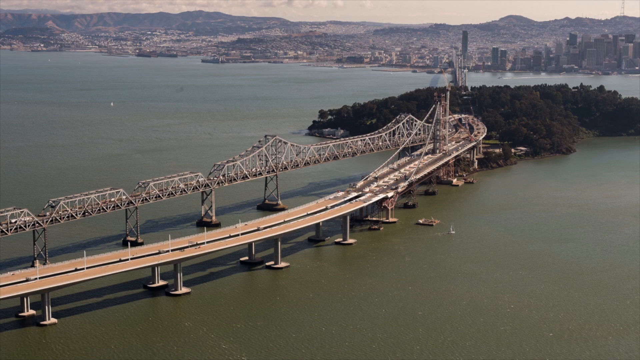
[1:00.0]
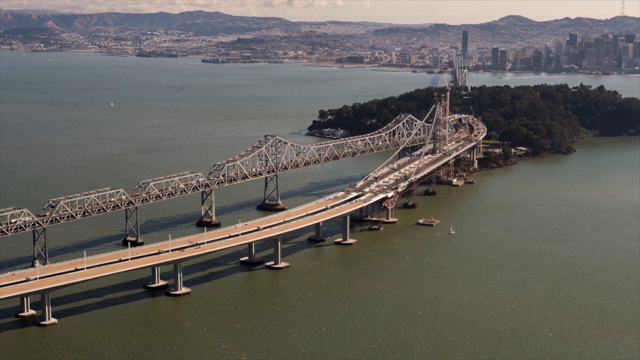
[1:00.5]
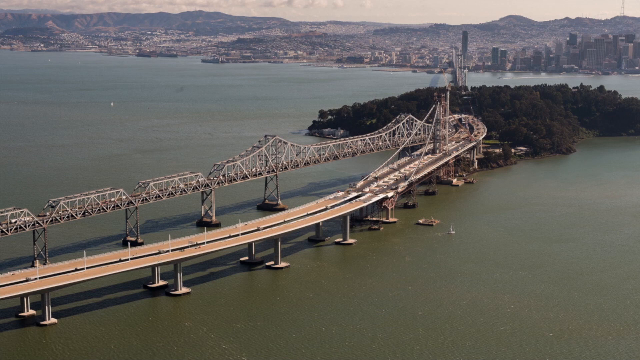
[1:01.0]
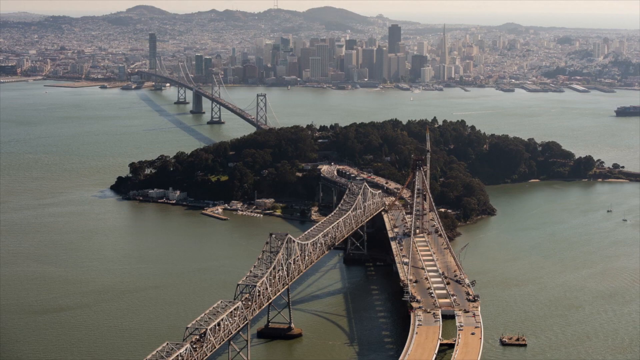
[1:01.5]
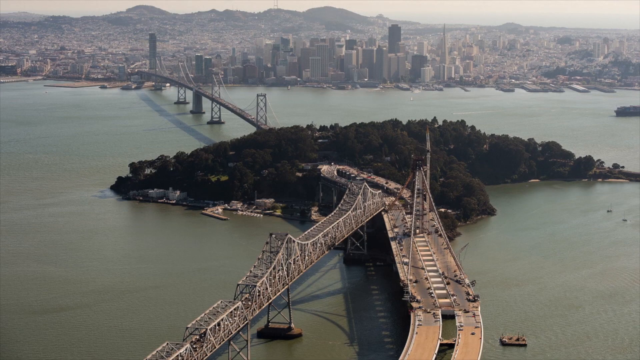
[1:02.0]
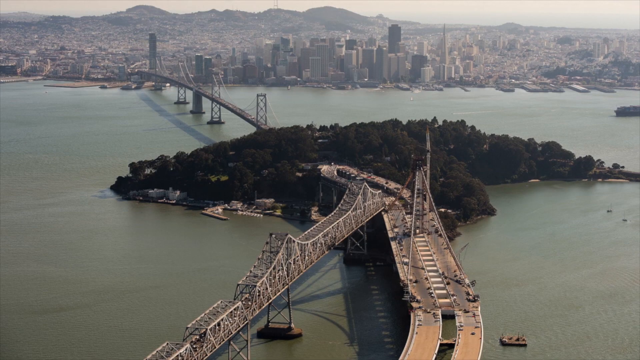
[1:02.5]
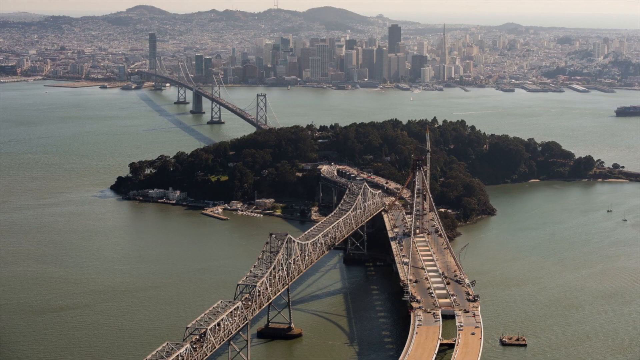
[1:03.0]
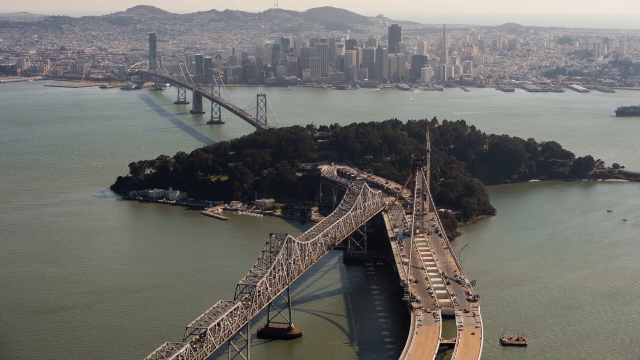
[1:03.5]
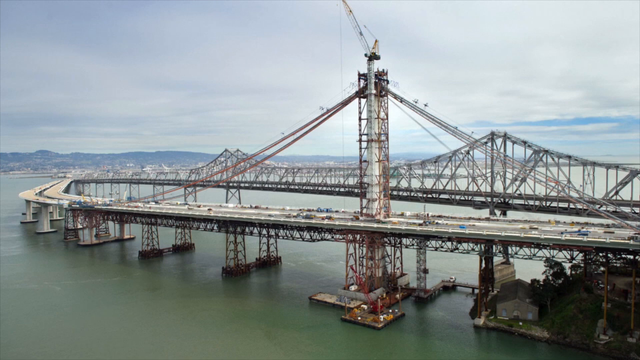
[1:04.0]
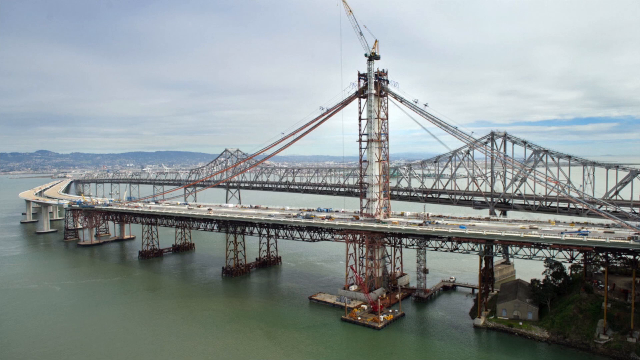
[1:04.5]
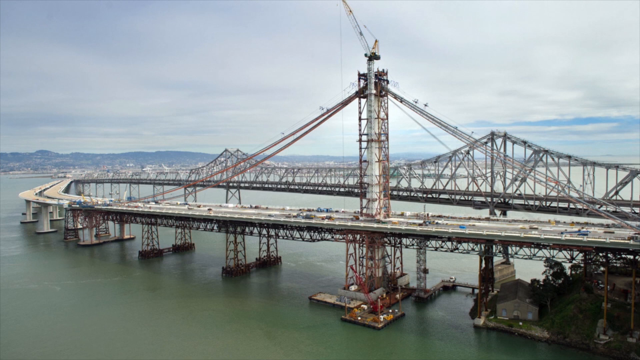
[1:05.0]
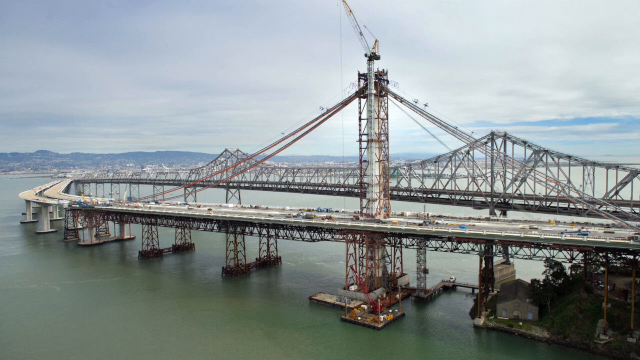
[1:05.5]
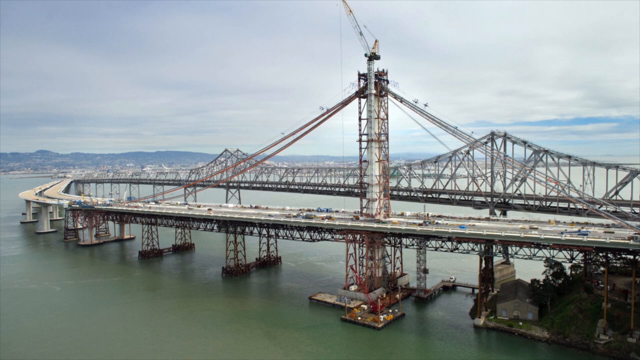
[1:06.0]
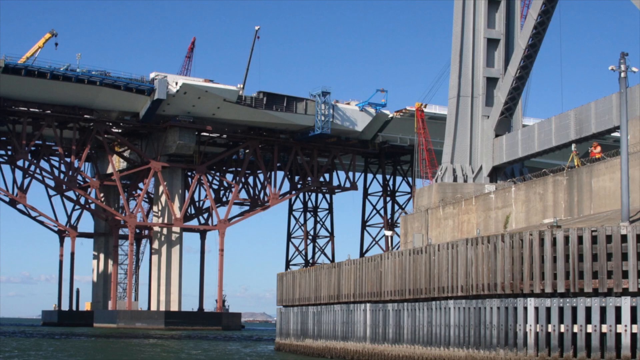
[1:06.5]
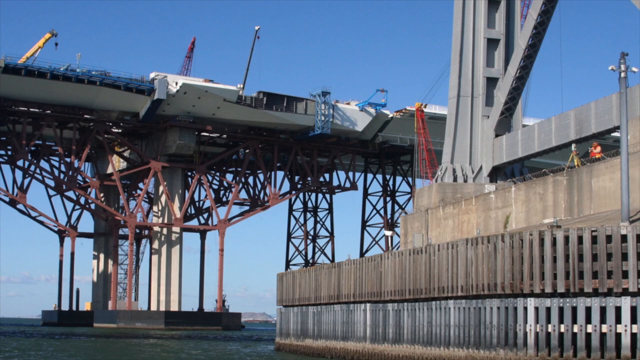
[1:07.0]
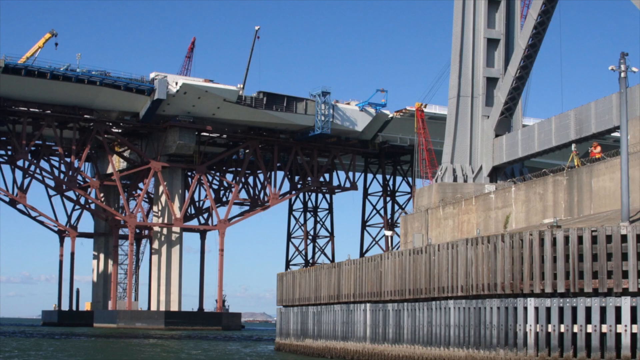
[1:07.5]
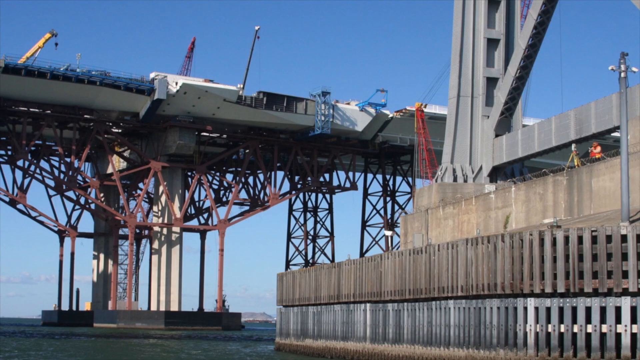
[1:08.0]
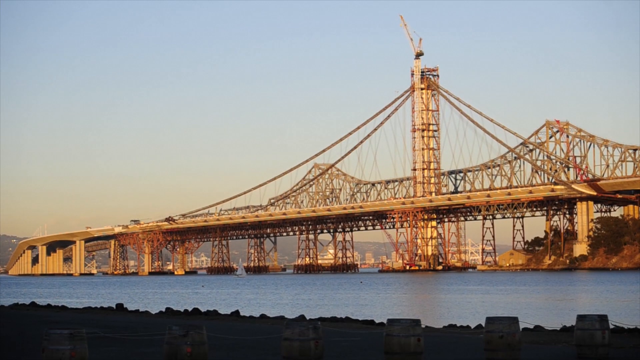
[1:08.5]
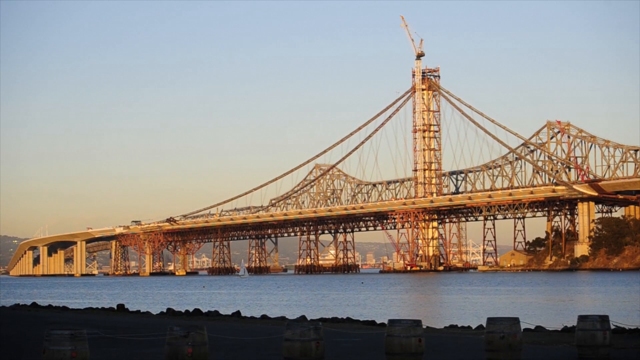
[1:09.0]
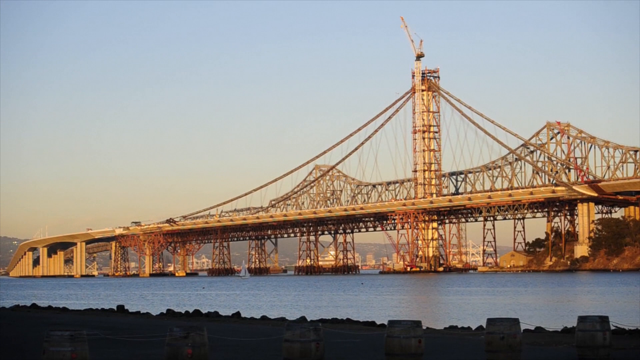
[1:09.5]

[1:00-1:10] An aerial shot shows the San Francisco-Oakland Bay Bridge span, starting from the lower left side and reaching about the middle of the picture. In the upper right is an island with a forest on it at the other end of the bridge, a city is in the background on the upper right, and the rest of the picture is a body of water. Another picture shows the same scene from slightly above the bridge: the forested island is in the center of the water with a span of bridge behind it, and another span of bridge on the upper left side leads to the city in the background, with water around the bridge and the island. Another picture shows the bridge from the side and a little closer, with water underneath. Construction beams are around the bridge; there is a tall white tower in the center of the bridge, with red construction beams built around the tower. Suspension cables are attached to the top of the tower and run back down to the bridge, and a city is in the background. The next picture is taken from near the water surface, looking up beneath the bridge. On the right is a large concrete piece of foundation with a big metal piece at its top, and on the upper left is the bottom of the bridge, with construction beams and red beams attached to it. The sky in the background is blue. Another picture, from farther away than the previous one, shows more of the red construction beams and the white tower in the center of the bridge, with four suspension cables coming down to the bottom of the bridge, two on the left and two on the right. Water is at the bottom of the picture, and the sky is slightly white and hazy. This appears to be a video, and it is slightly shaking.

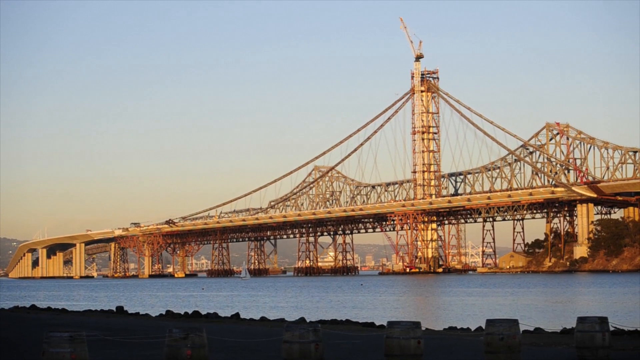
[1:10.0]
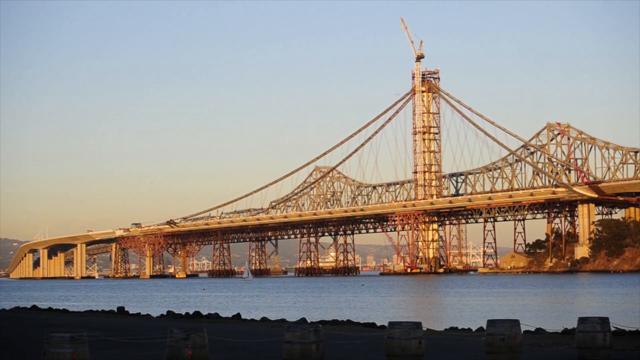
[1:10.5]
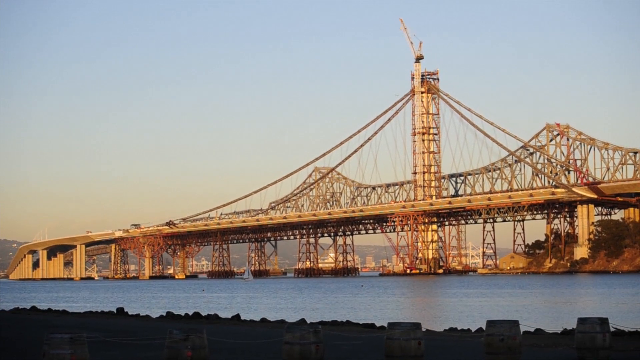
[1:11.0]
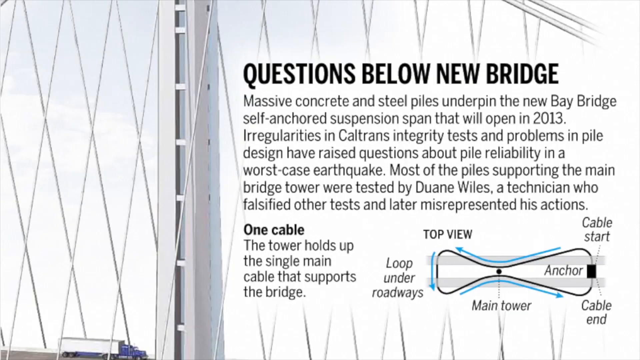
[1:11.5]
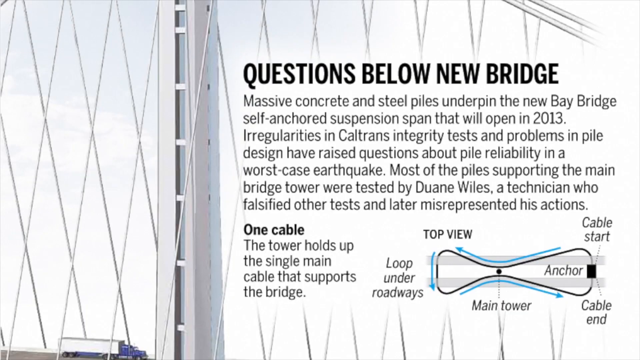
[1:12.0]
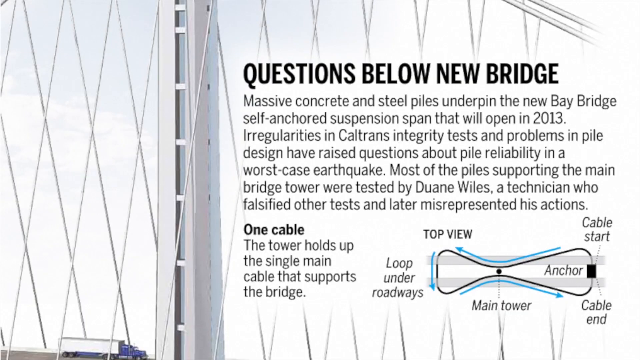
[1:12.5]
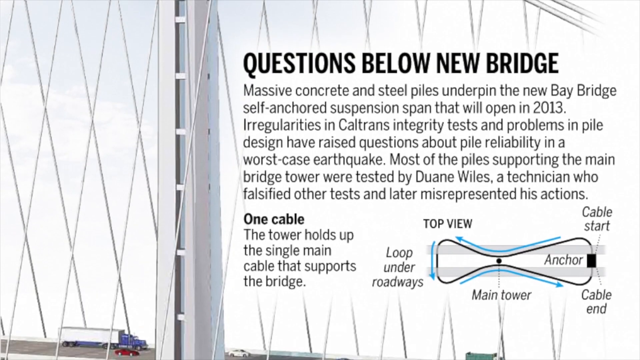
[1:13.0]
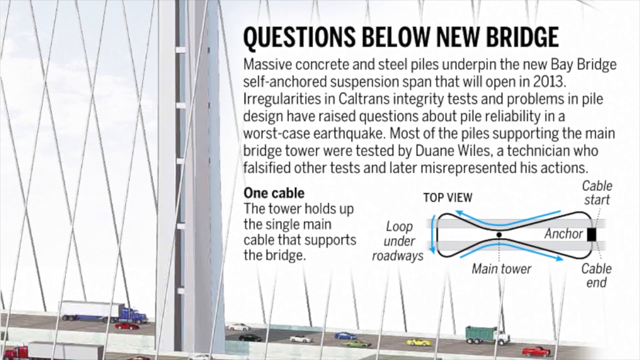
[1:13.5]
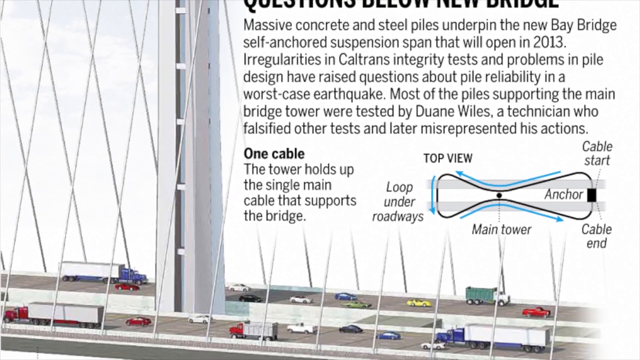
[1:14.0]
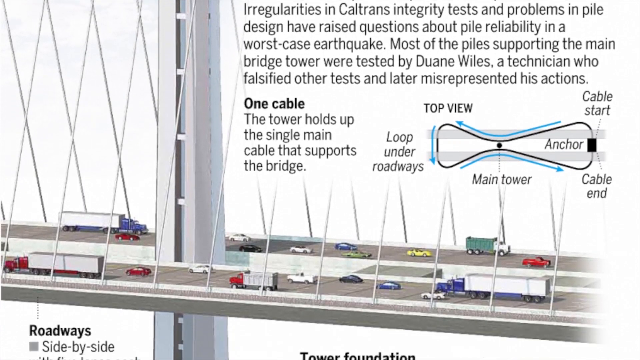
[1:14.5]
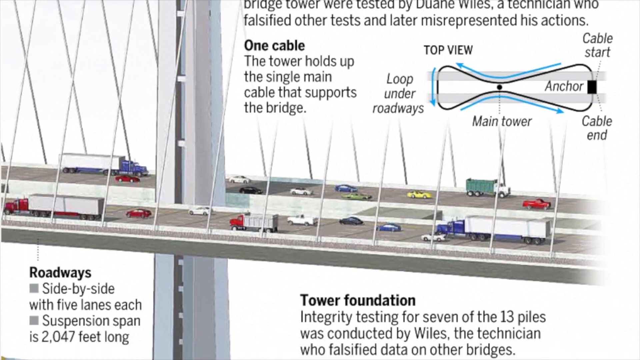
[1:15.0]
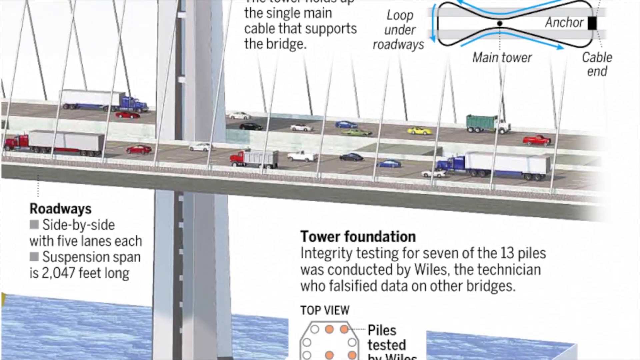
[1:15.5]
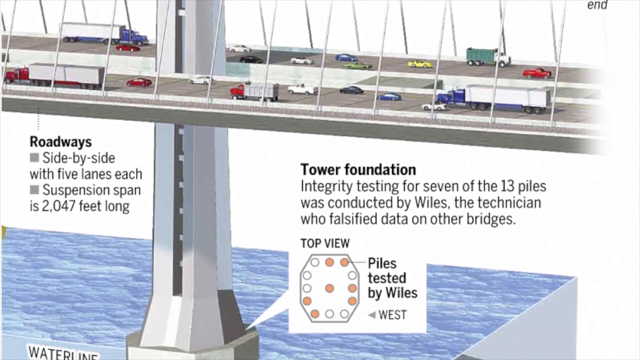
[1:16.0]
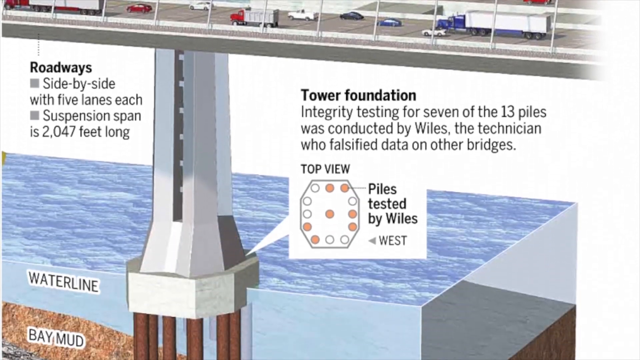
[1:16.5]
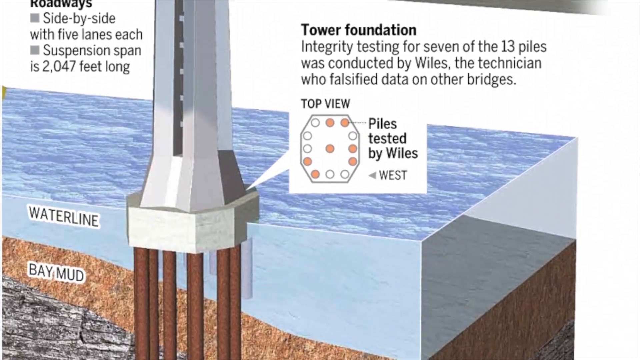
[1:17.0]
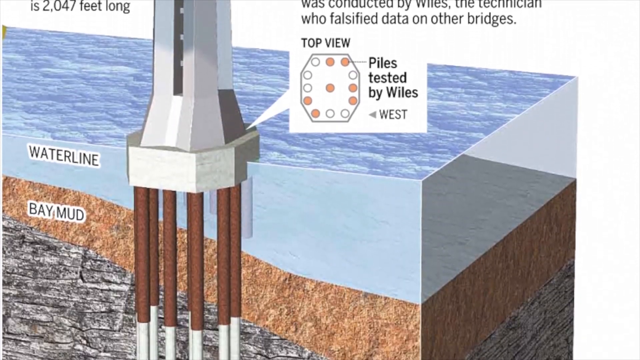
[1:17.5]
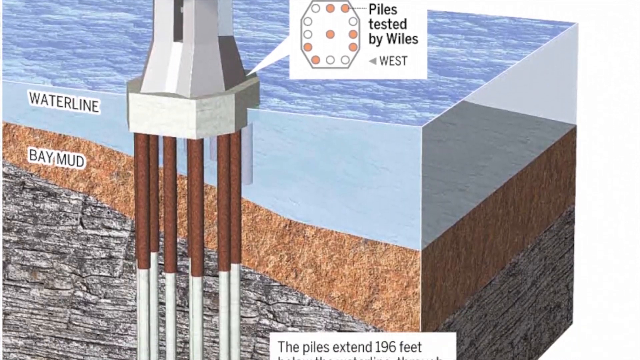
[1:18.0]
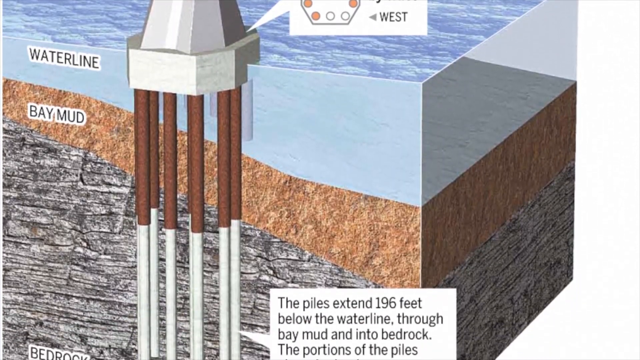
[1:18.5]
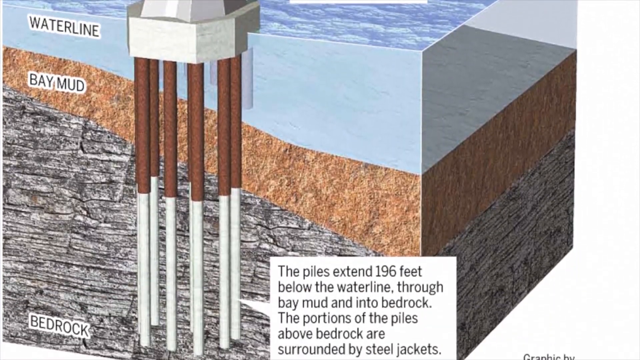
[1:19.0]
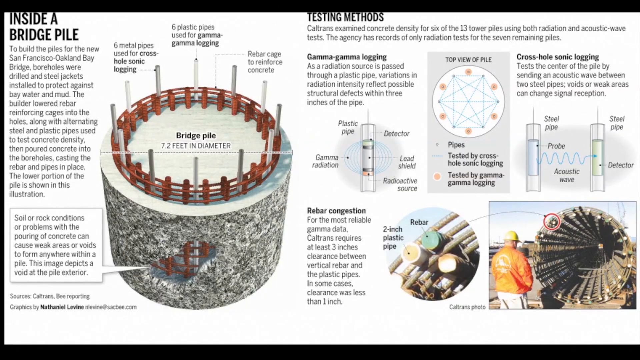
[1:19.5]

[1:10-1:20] A slightly shaking video shows the San Francisco-Oakland Bay Bridge span from the shore. A large white tower is in the center of the bridge, and two red suspension cables attached to the top of the tower go down to the bridge itself. Red construction beams are attached to the tower and to other parts of the bridge, and water is visible beneath the bridge. Next comes a newspaper clipping with a paragraph of text and the title "Questions below new bridge." As the view pans down the clipping, a drawing of the Bay Bridge appears in the background, with cars, trucks and other vehicles on the bridge. There is a diagram of the bridge that looks almost like an hourglass turned on its side. On the right side of the hourglass is the word "anchor"; beneath its center are the words "main tower"; to its left, "loop under roadways"; above its left side, "top view"; above its right side, "cable start"; and below its right side, "cable end." The view then scrolls down the diagram of the bridge, from the bridge to the foundation underneath in deep water, and then to the beams that go down into the water and into the ground beneath the water.